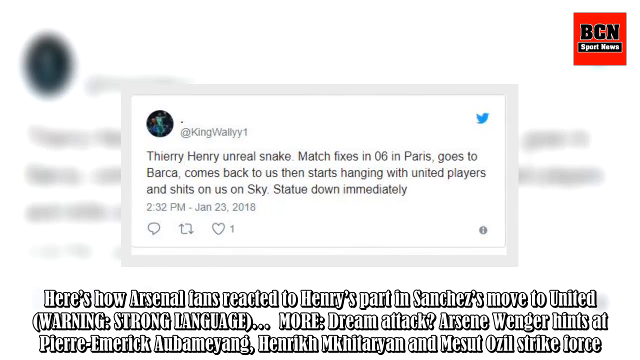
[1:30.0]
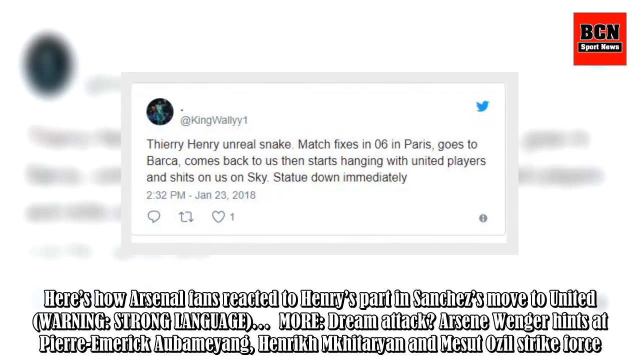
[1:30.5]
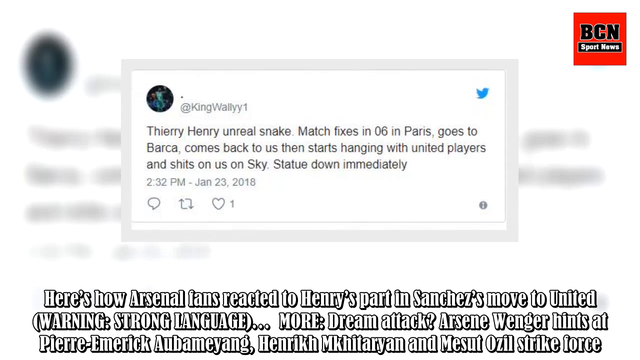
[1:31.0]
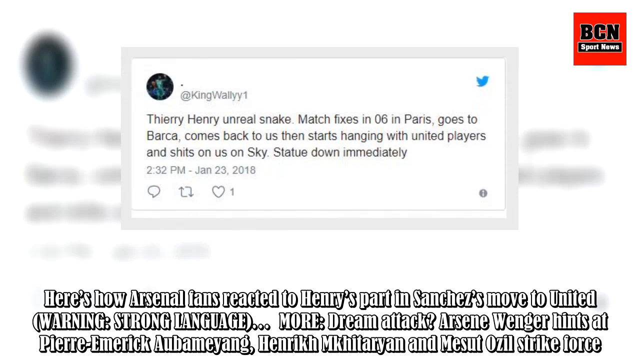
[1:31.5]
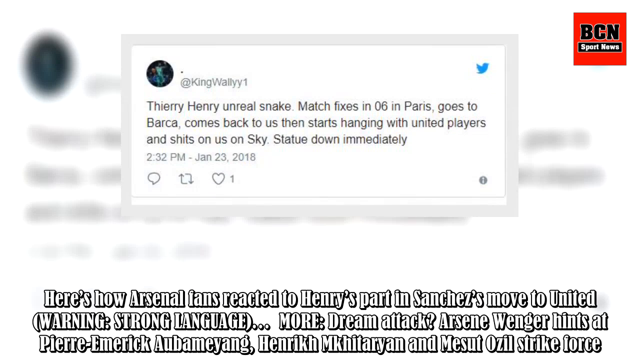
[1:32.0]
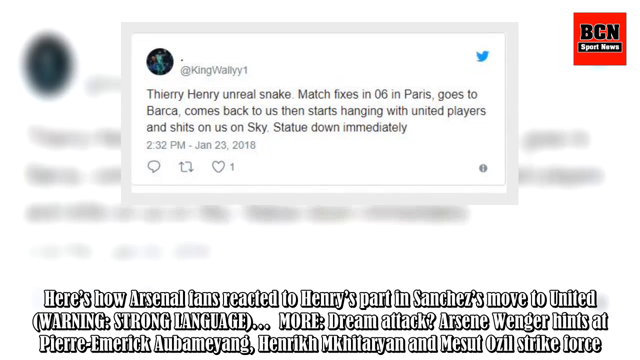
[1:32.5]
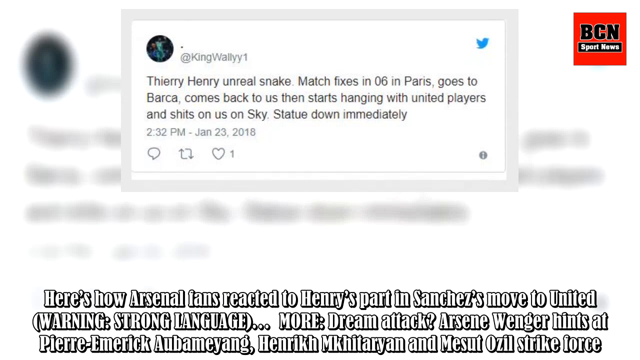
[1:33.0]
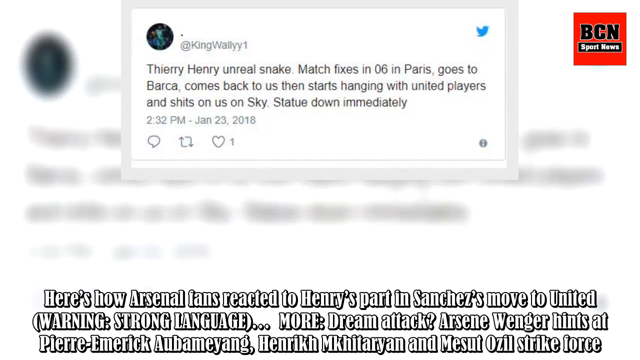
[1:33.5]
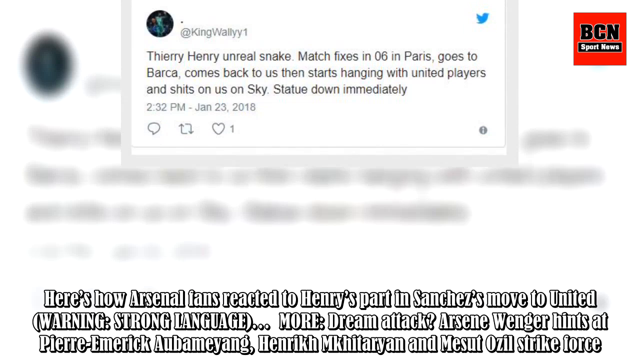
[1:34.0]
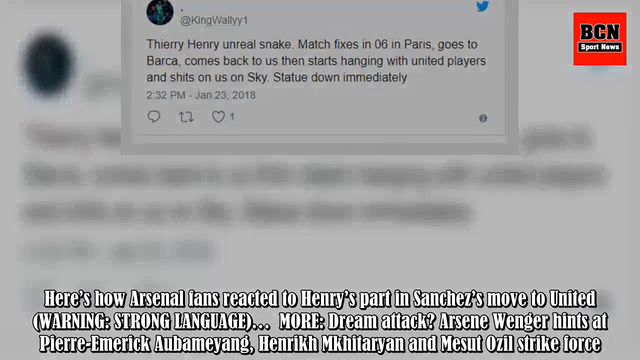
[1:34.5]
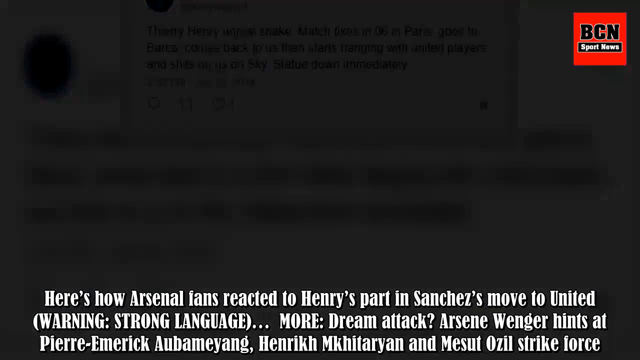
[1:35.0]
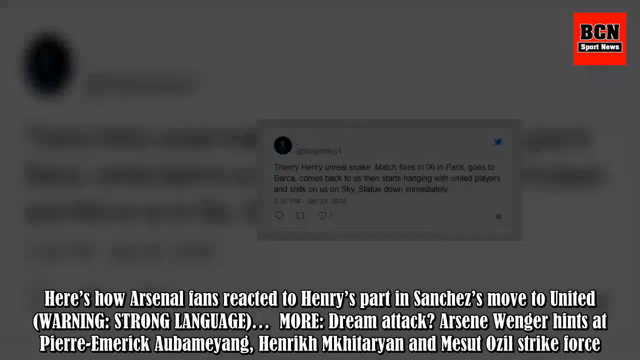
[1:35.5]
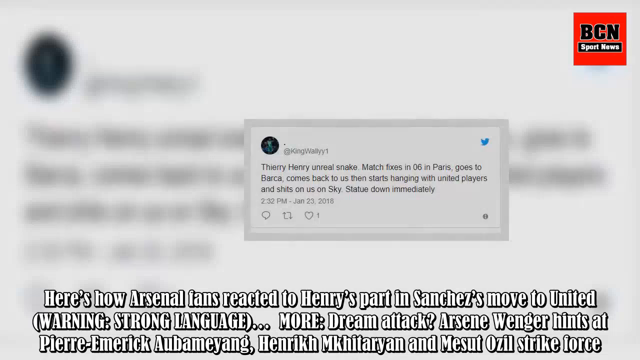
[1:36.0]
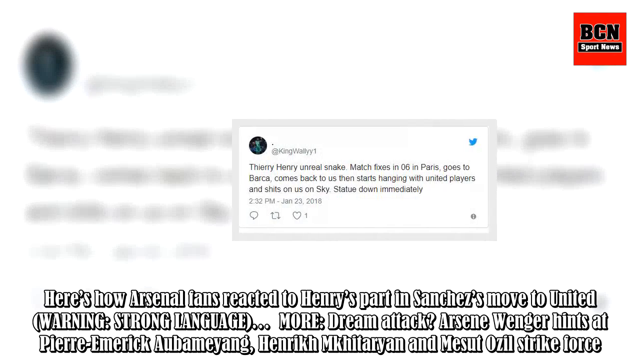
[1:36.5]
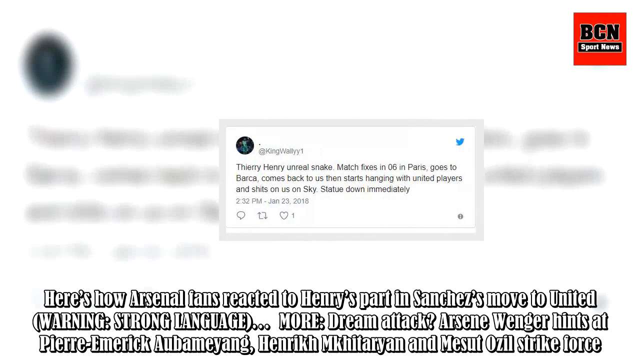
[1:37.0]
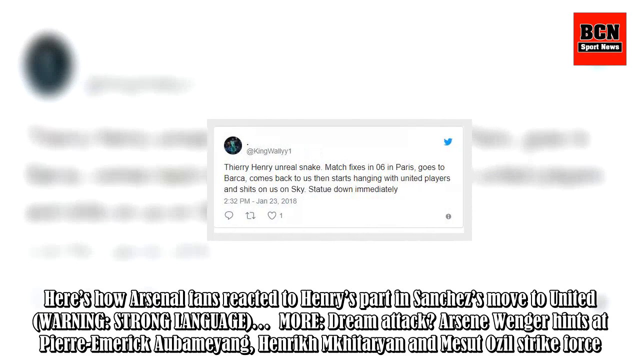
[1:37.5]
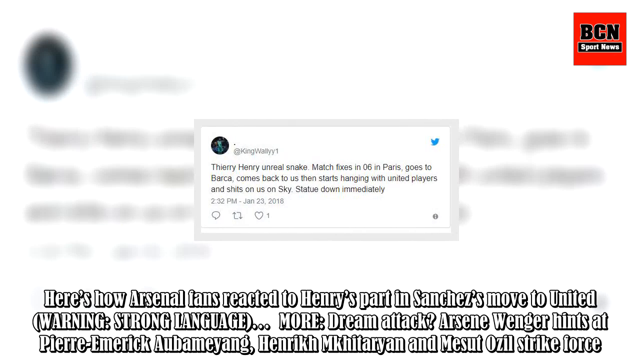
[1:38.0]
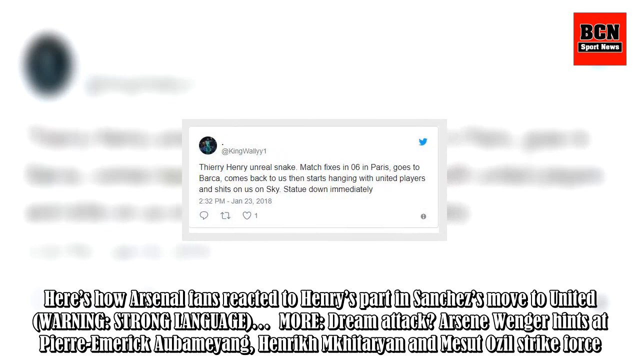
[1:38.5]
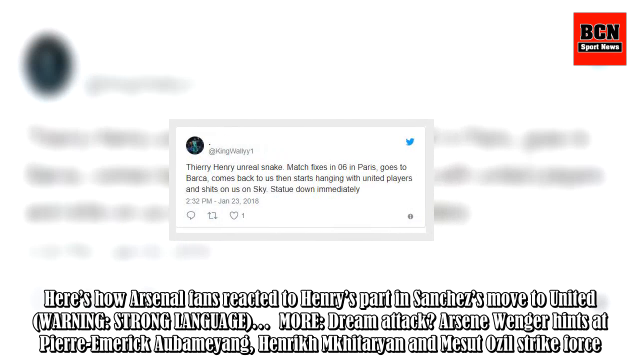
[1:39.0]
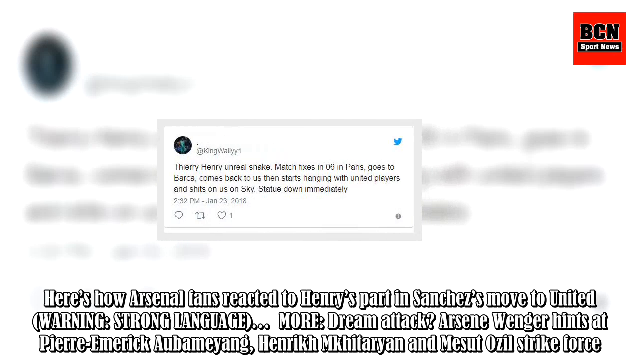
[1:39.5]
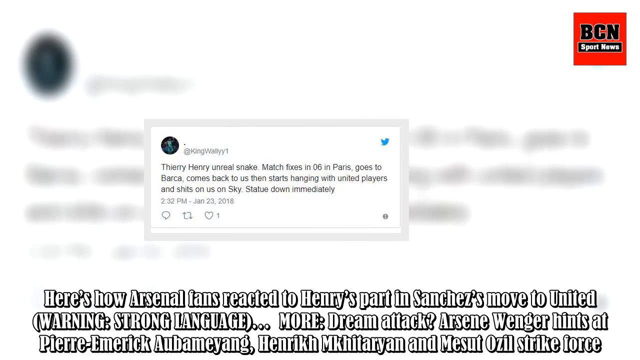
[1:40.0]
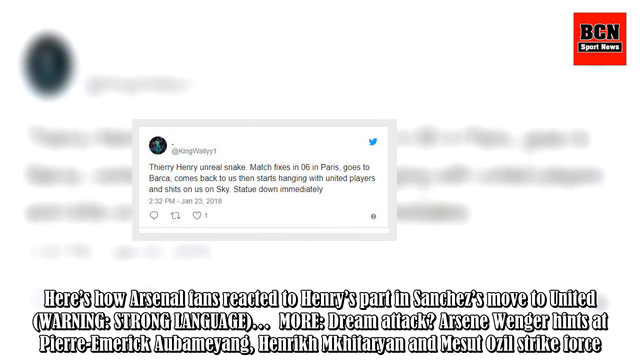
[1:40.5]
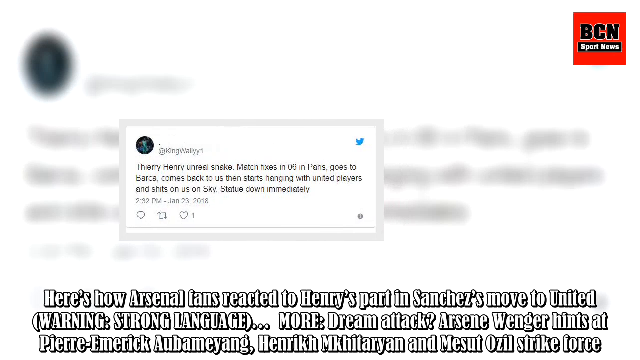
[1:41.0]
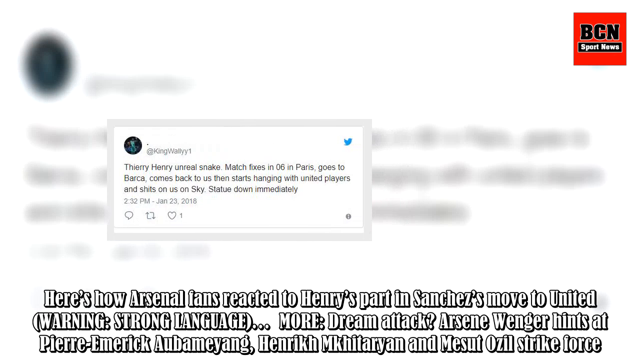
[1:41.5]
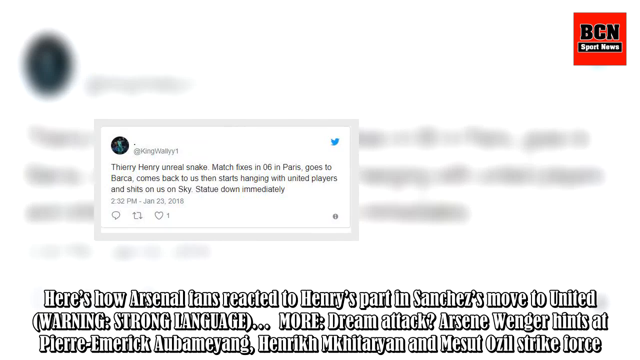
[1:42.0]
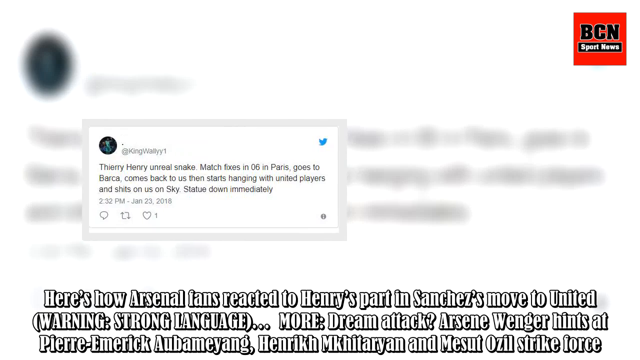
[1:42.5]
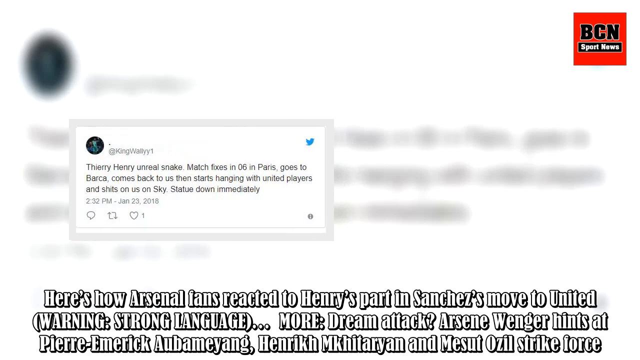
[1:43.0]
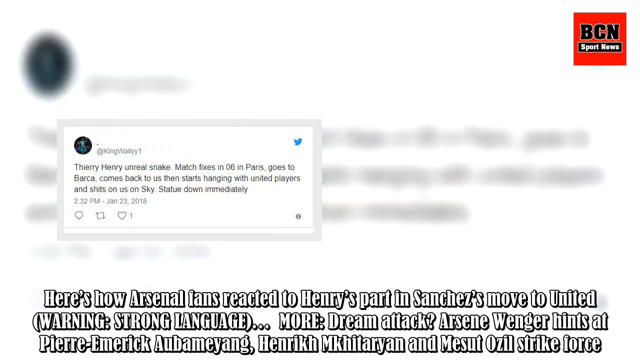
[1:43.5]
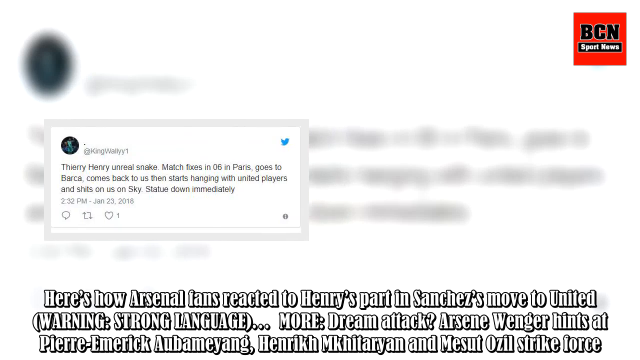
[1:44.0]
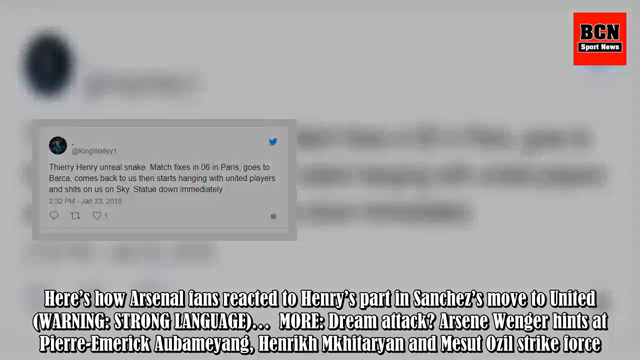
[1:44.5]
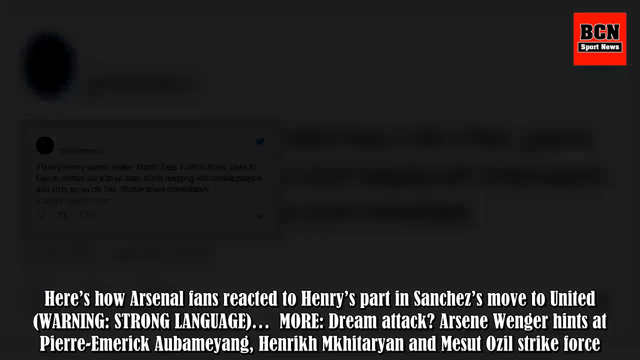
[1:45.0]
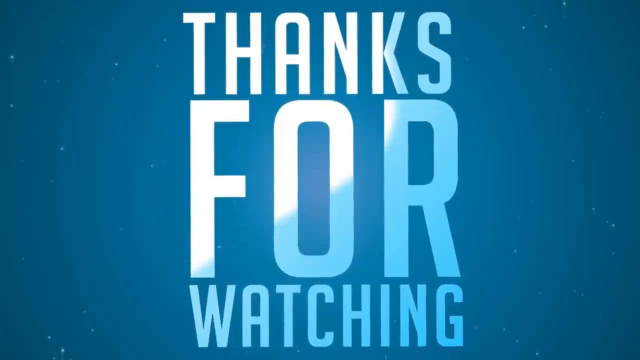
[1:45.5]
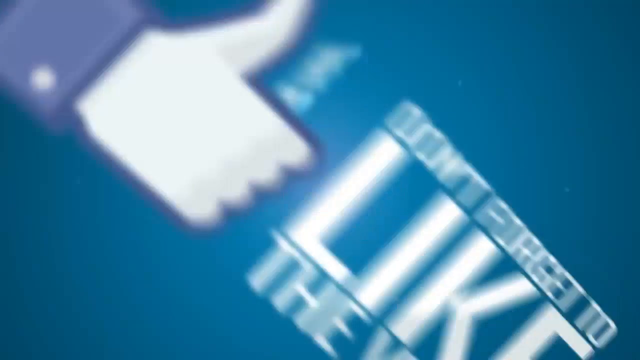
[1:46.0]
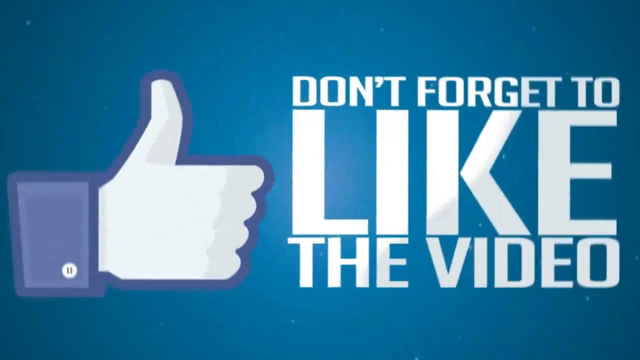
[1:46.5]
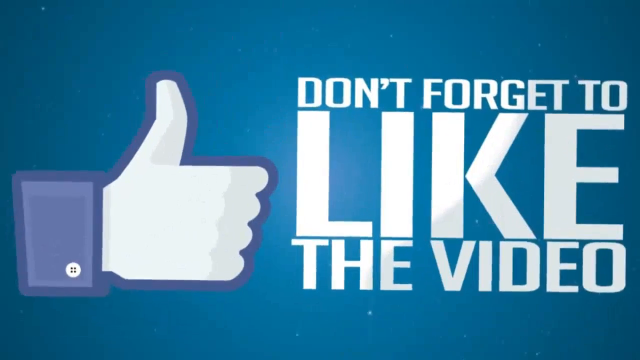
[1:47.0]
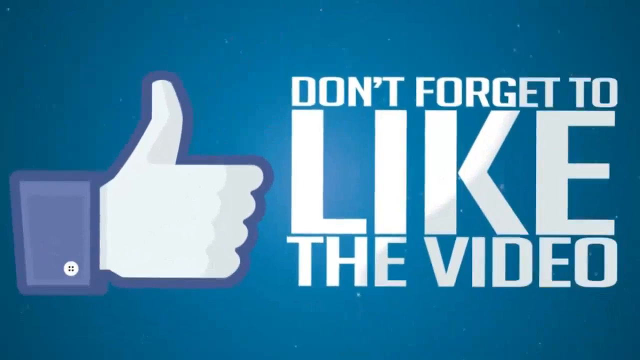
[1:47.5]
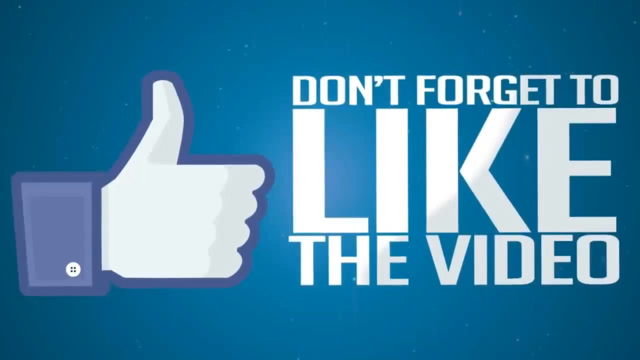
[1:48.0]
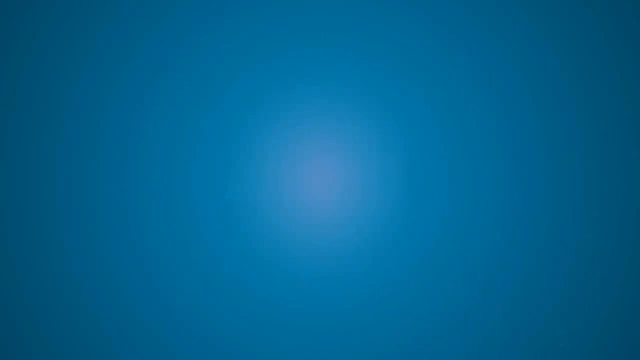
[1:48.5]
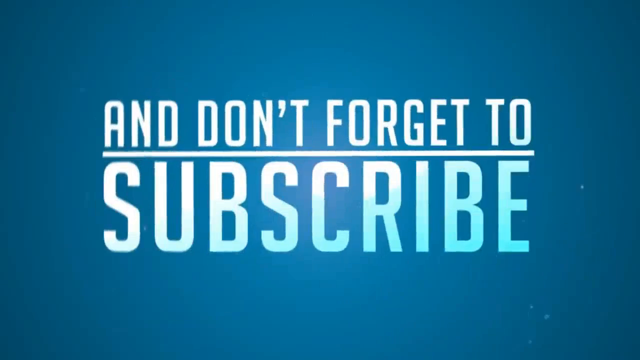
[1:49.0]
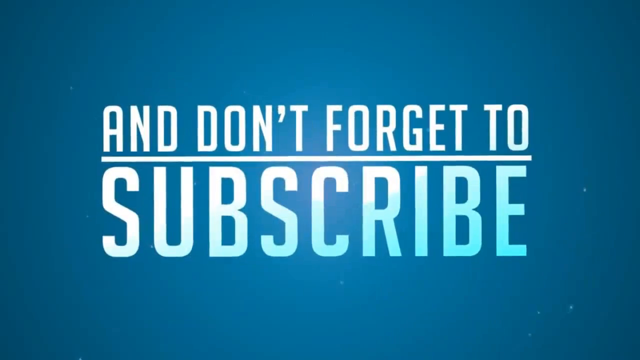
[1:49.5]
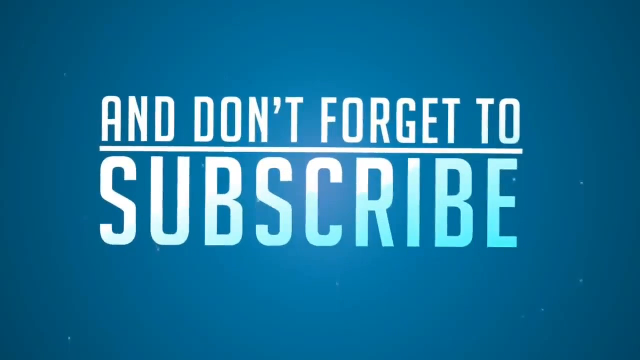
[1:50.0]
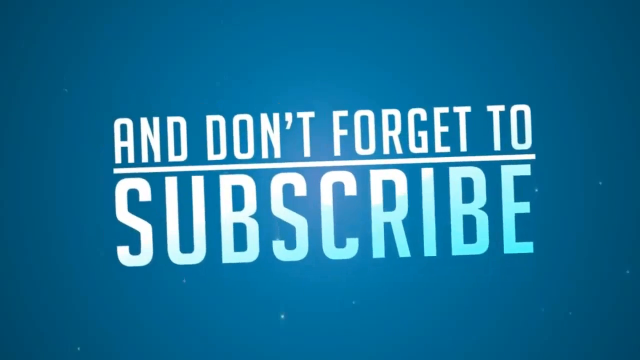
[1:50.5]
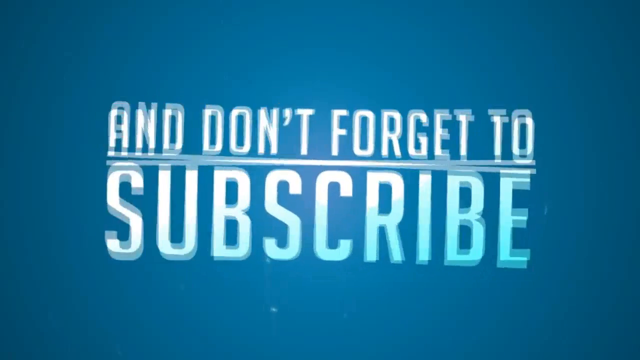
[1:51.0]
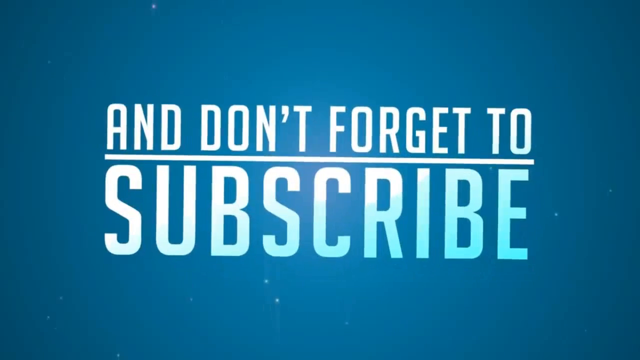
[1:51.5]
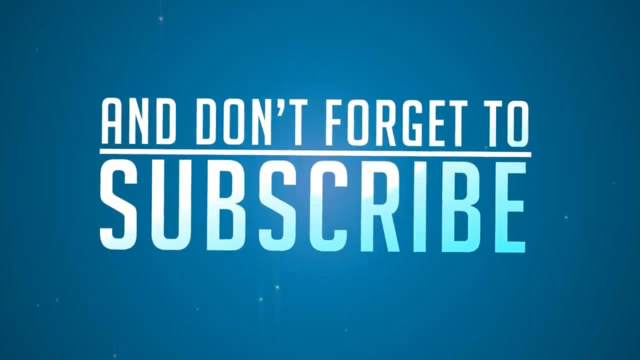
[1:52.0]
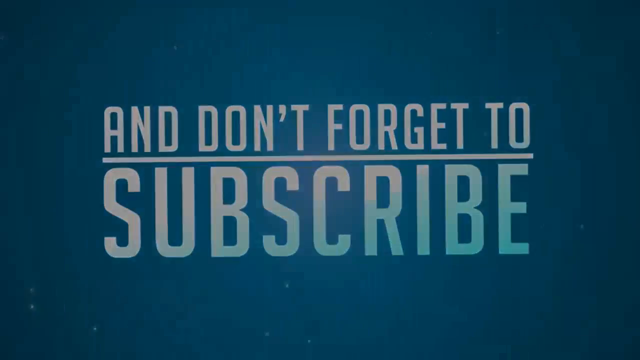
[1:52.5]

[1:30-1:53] Tweets about the statue keep coming in, and there seem to be a lot of them.